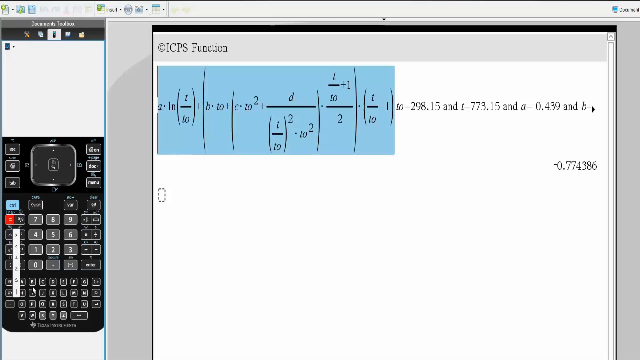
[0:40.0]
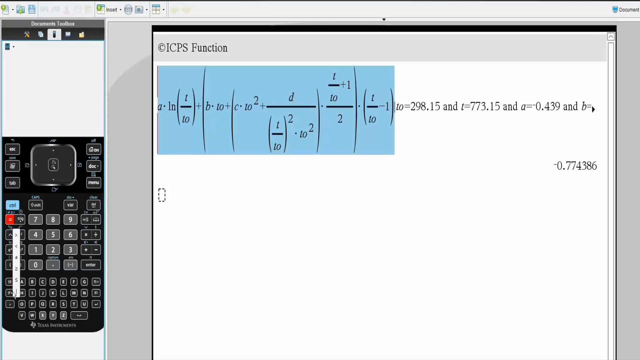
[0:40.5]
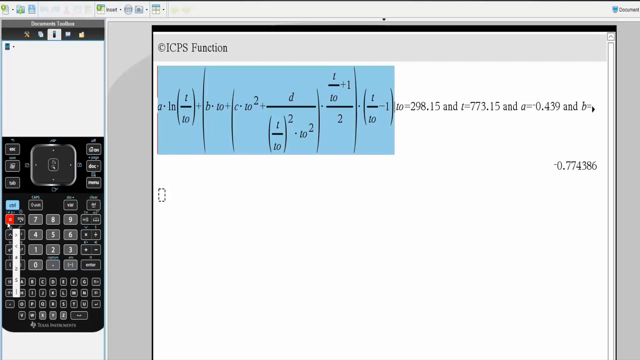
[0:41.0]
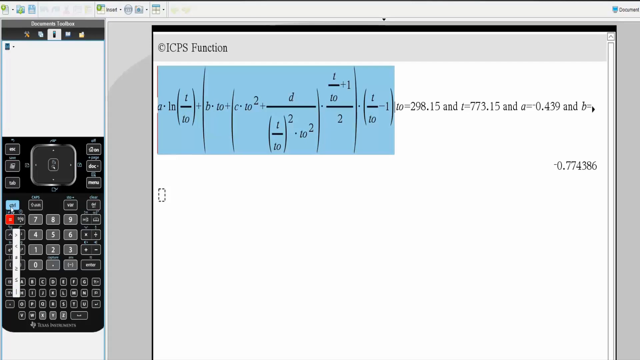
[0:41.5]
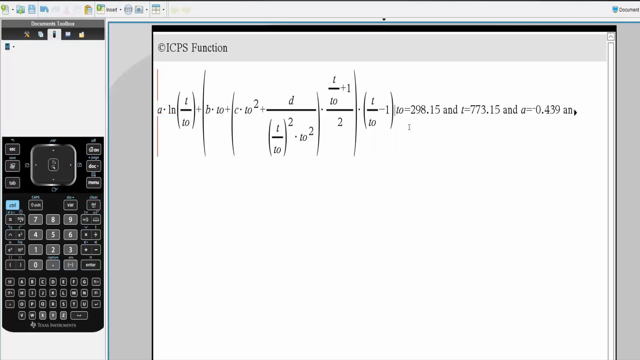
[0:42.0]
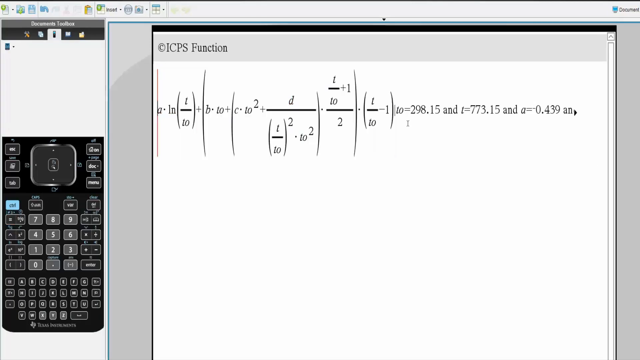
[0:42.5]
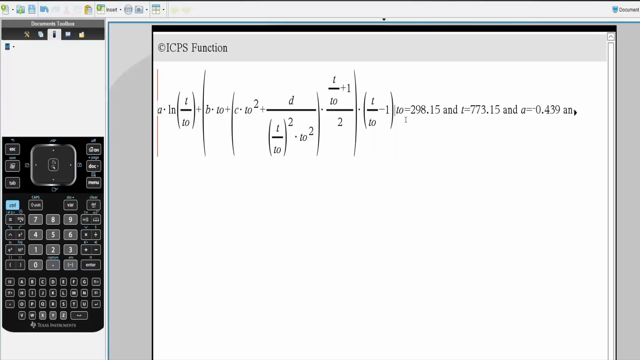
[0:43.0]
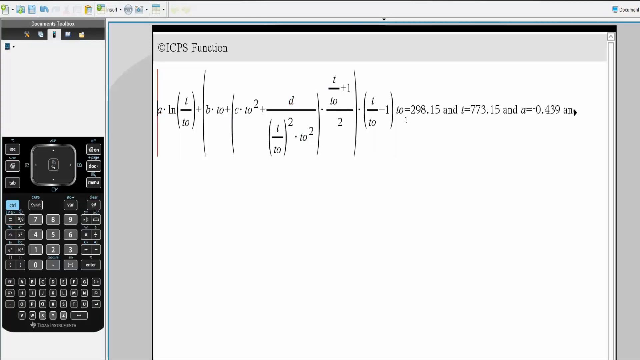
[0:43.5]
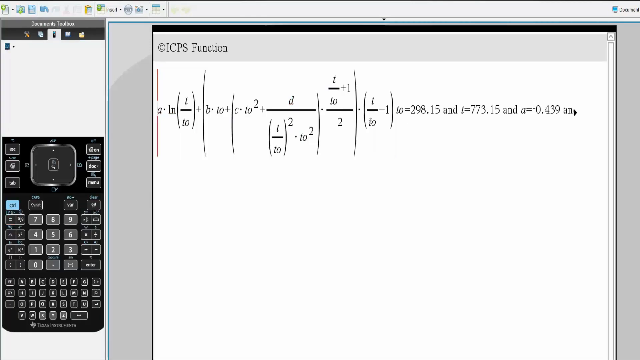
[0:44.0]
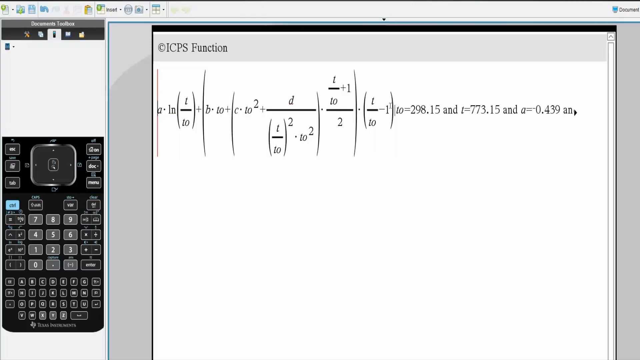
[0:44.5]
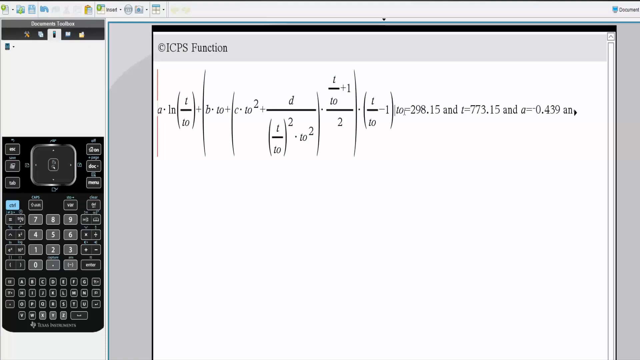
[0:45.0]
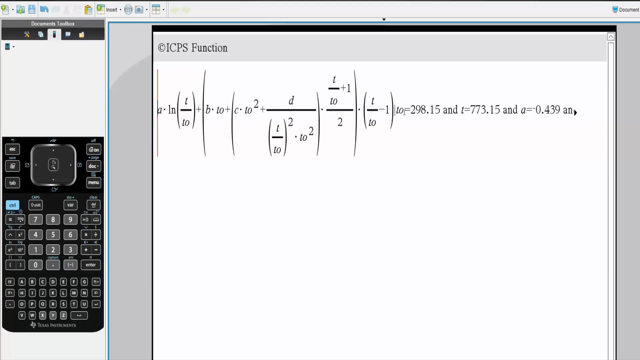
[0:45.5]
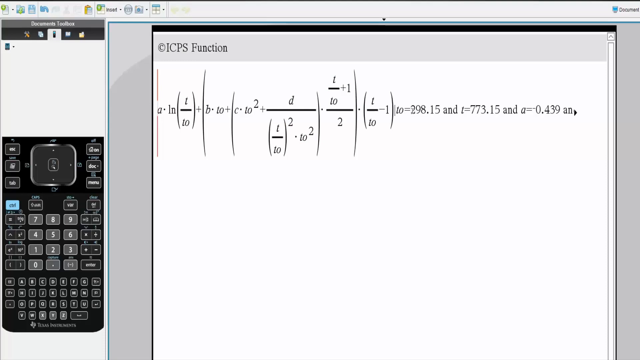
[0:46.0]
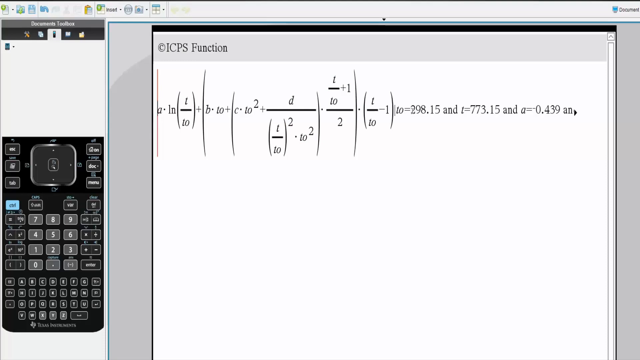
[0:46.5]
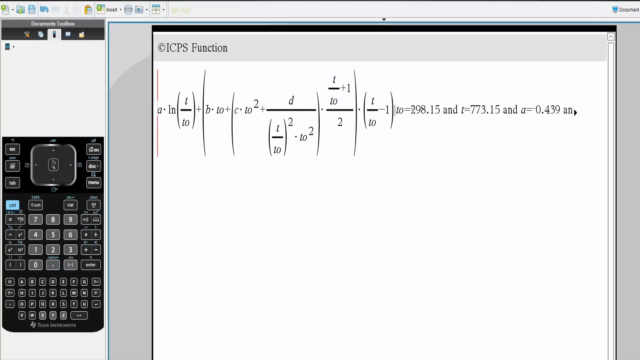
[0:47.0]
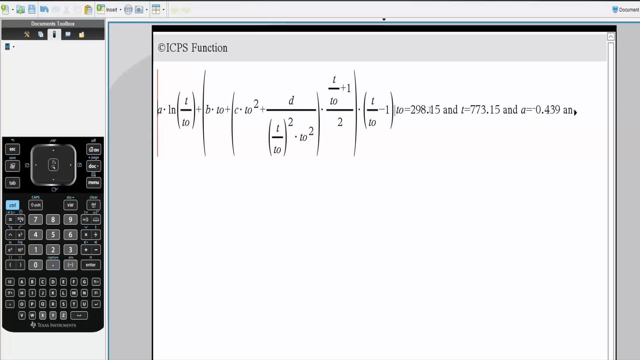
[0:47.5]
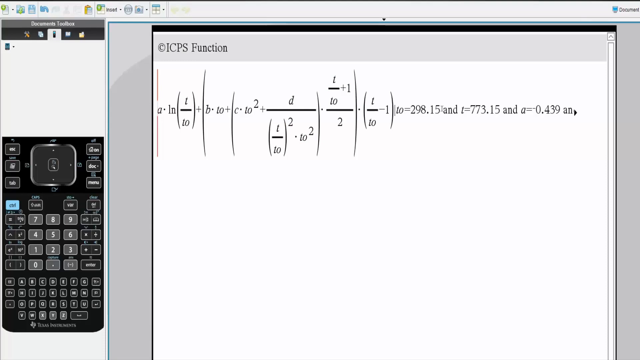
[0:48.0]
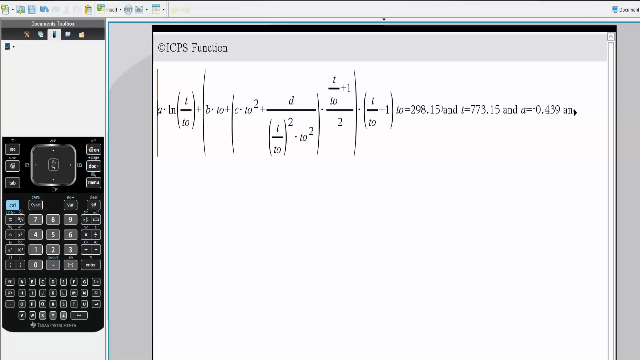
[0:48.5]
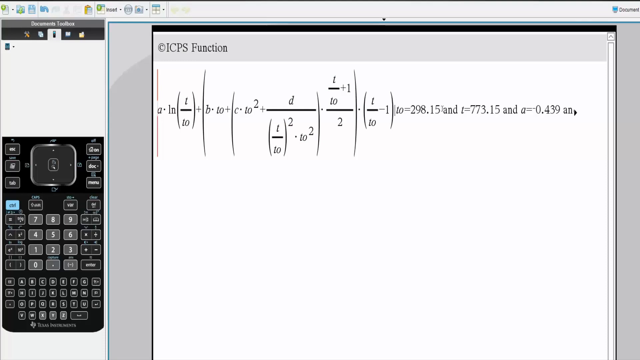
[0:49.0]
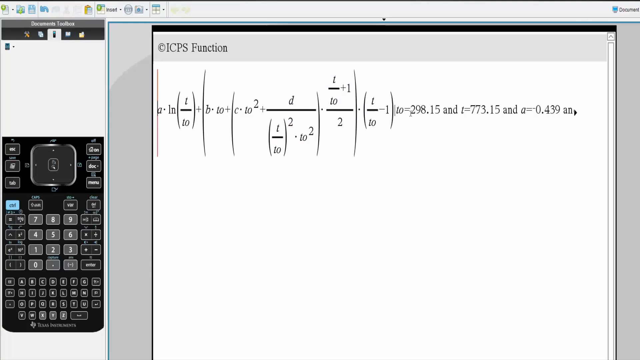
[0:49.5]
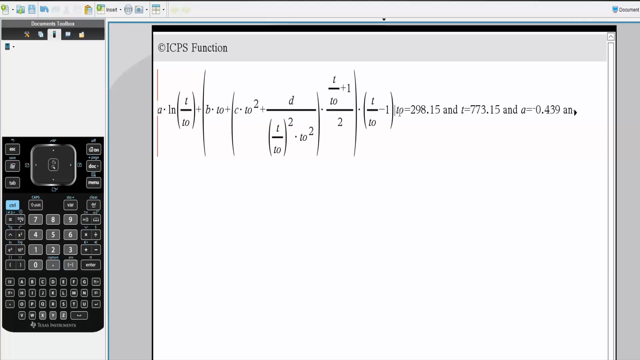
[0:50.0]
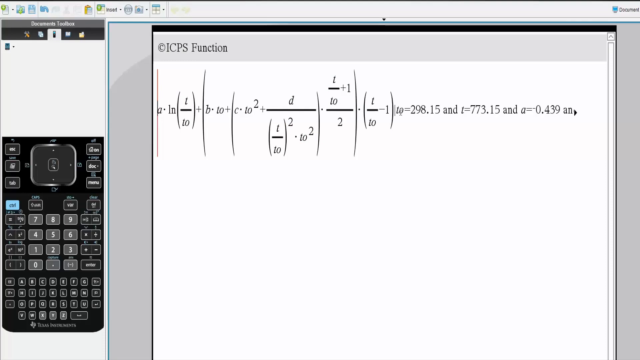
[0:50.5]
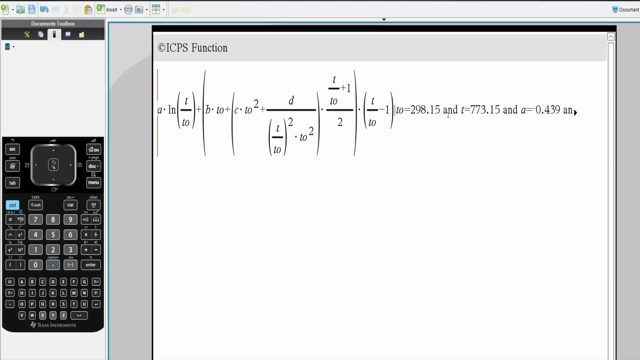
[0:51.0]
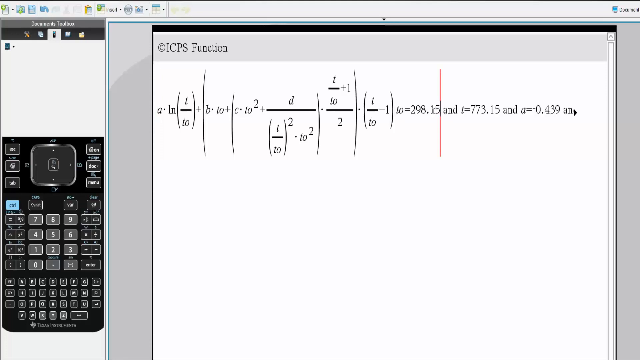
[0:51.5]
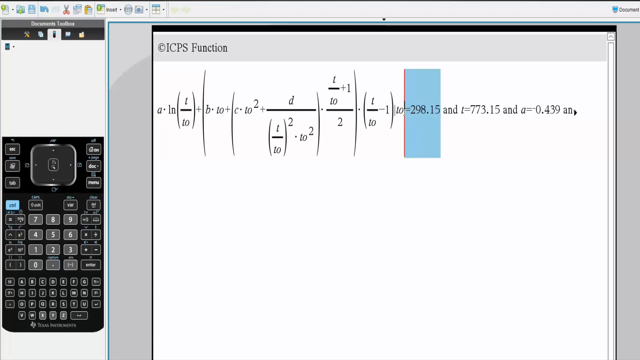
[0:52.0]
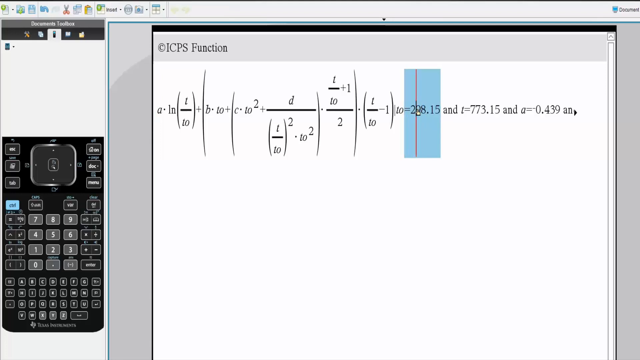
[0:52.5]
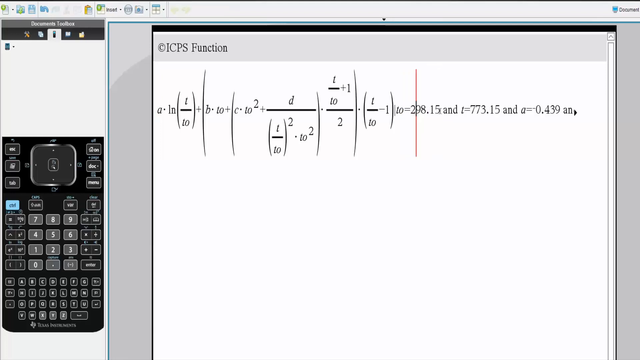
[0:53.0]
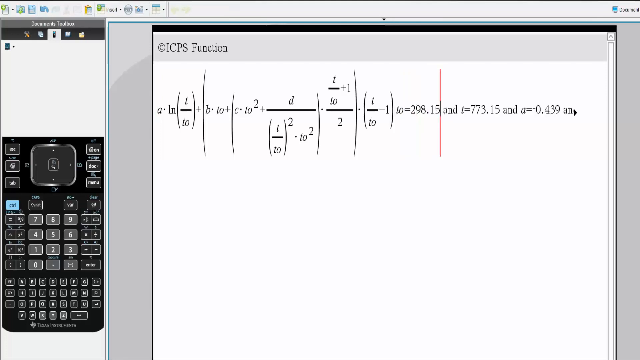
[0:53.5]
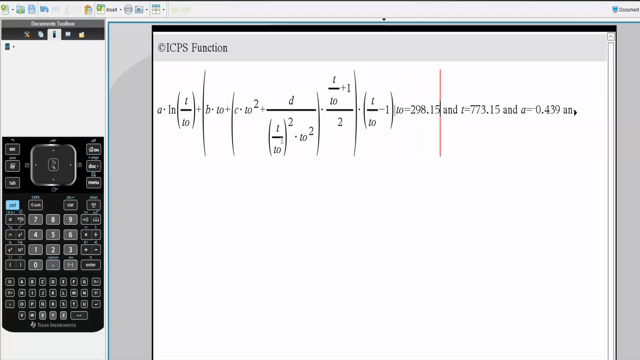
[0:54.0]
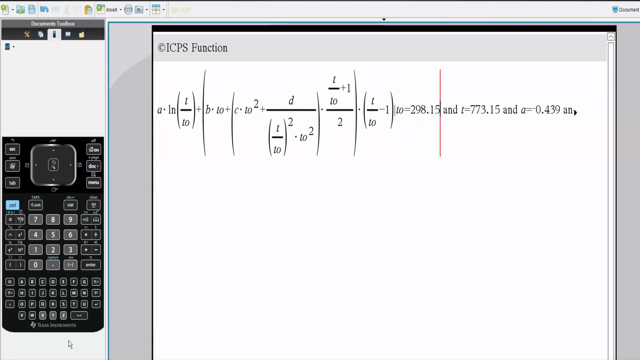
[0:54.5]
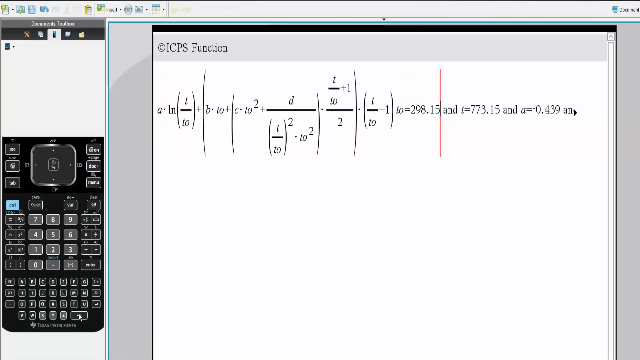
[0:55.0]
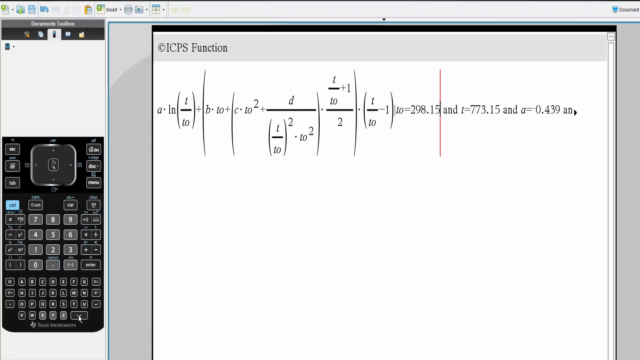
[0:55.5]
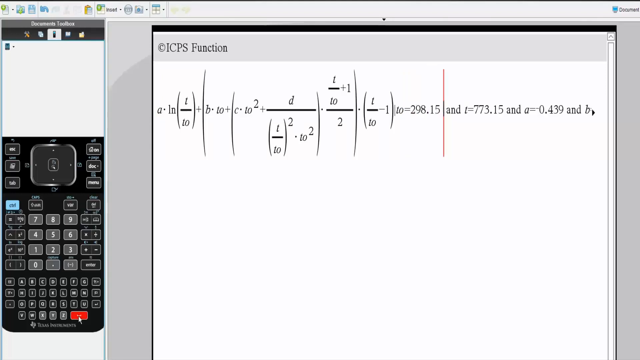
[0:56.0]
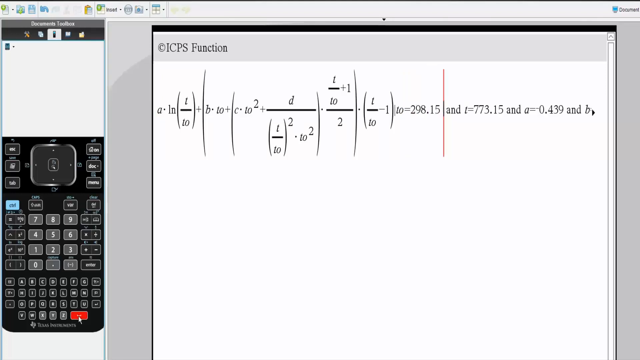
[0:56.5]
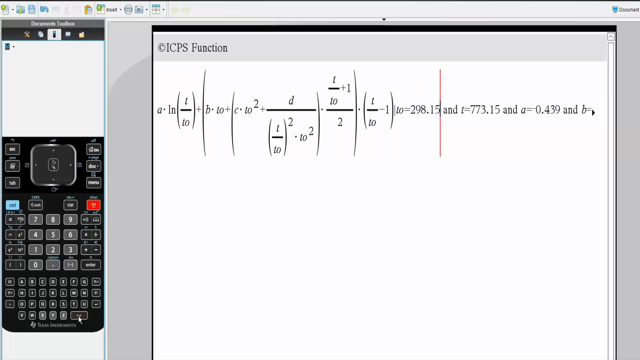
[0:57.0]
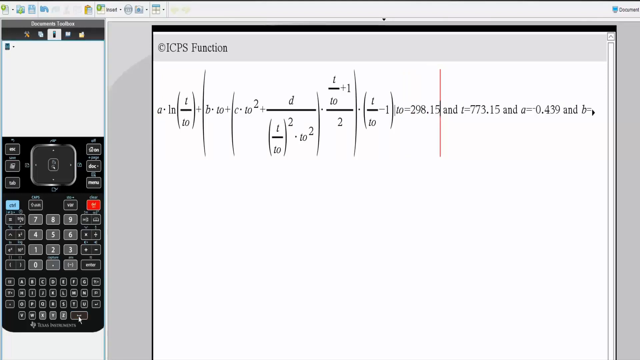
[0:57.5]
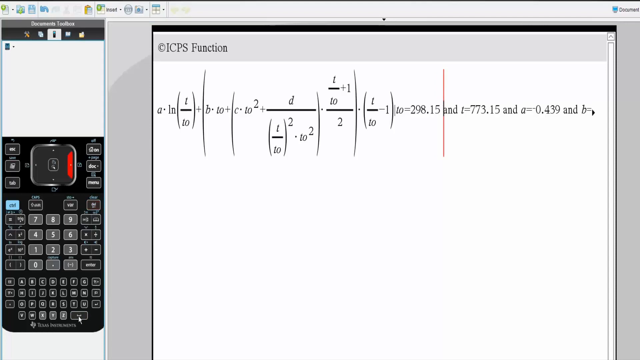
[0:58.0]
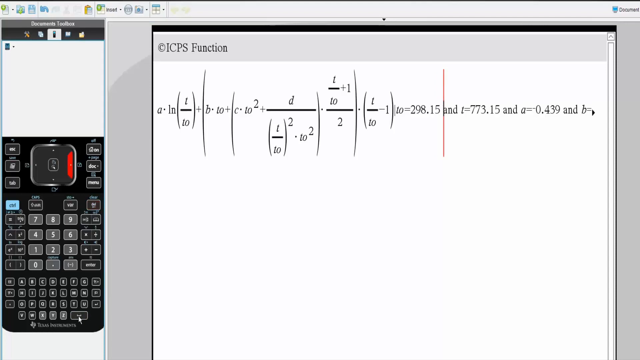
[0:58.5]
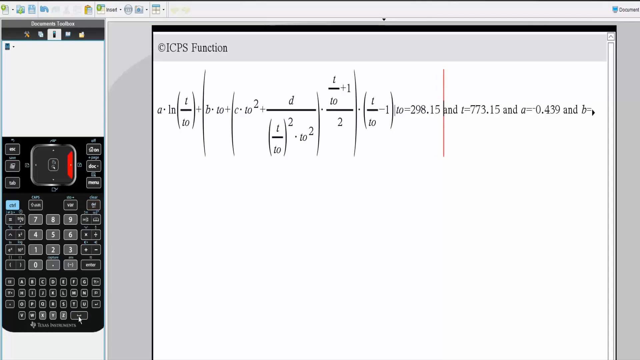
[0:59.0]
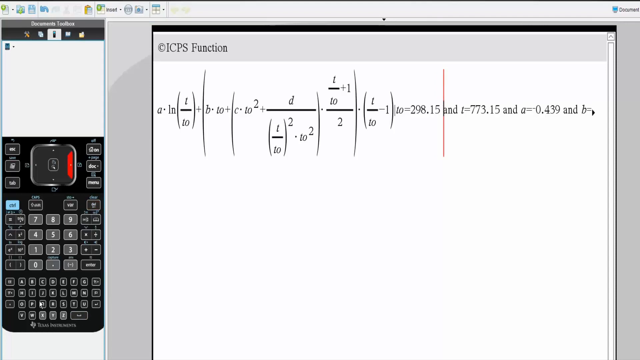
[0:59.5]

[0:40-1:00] The large ICPS function is on the right-hand side of the screen in what looks like a notepad application. On the left-hand side is a big graphic calculator with many different buttons and a white screen above it instead of the LCD screen usually expected on such a calculator. The cursor moves around the formula, apparently explaining different aspects of it. On the right-hand side, text reads T0 equals 298.15, T equals 773.15, and A equals 0.439, giving numbers to the variables. The cursor keeps moving around the formula and clicks buttons on the calculator as if explaining things.